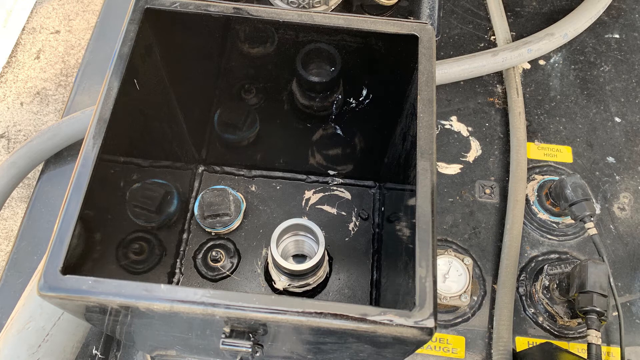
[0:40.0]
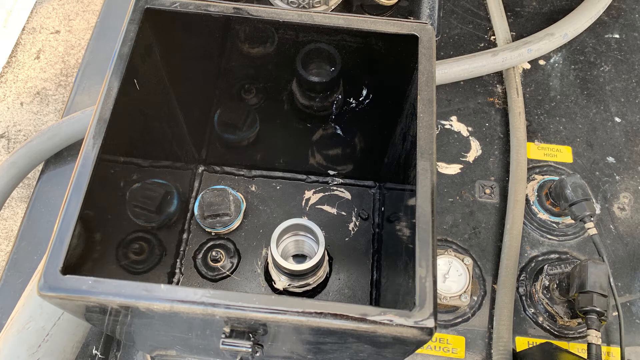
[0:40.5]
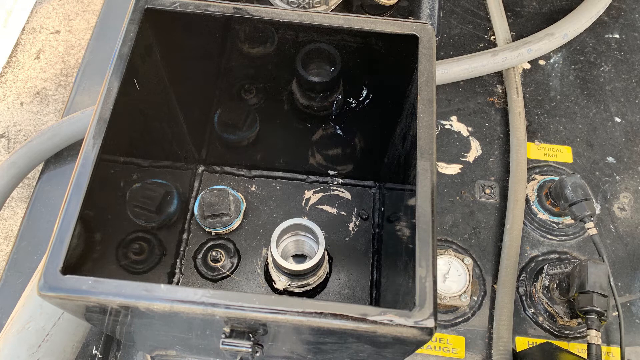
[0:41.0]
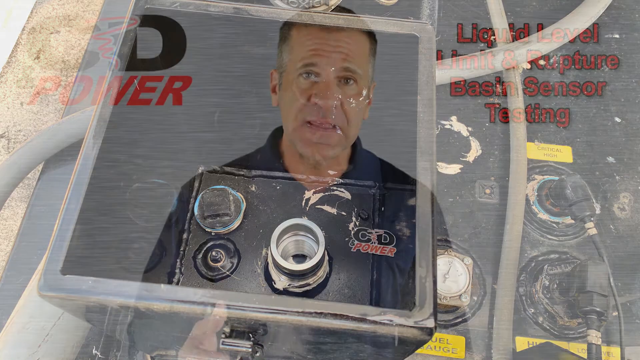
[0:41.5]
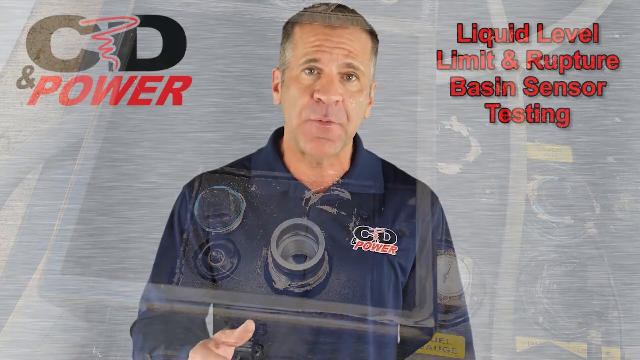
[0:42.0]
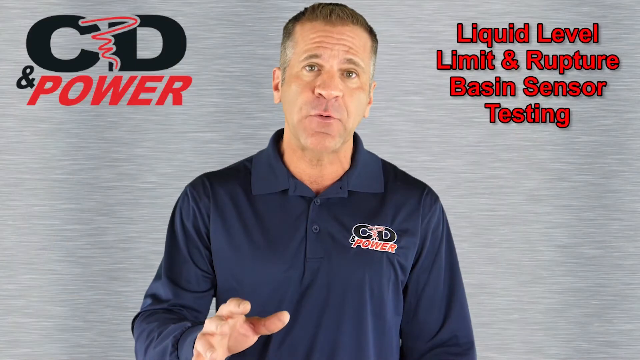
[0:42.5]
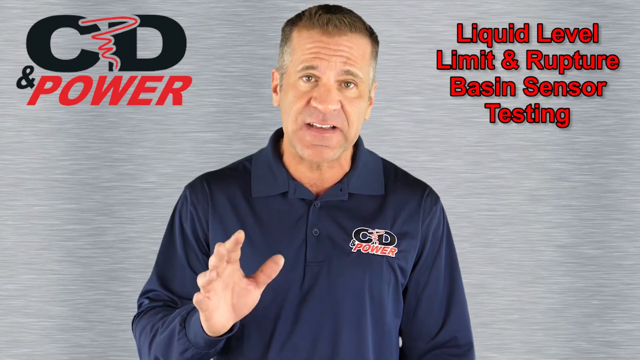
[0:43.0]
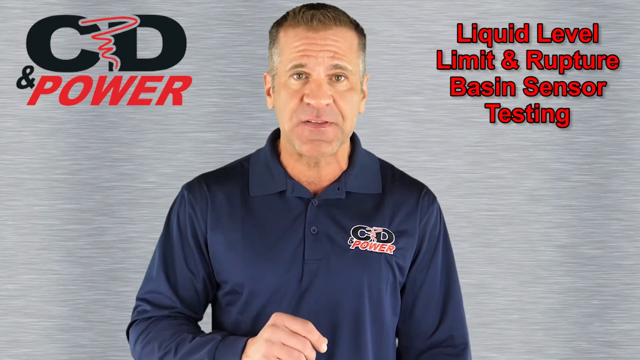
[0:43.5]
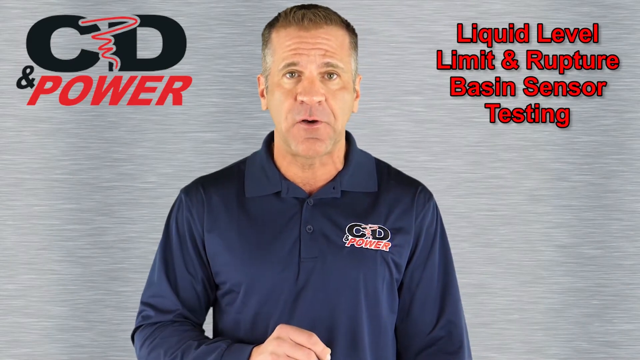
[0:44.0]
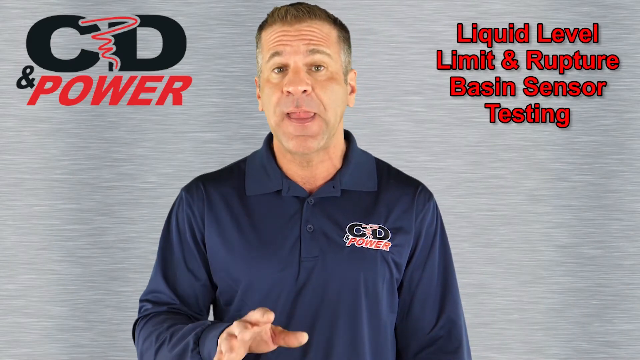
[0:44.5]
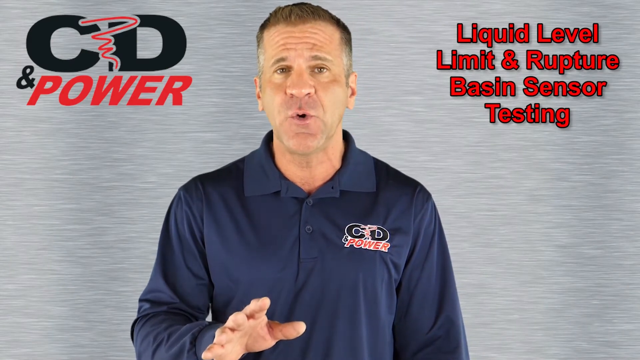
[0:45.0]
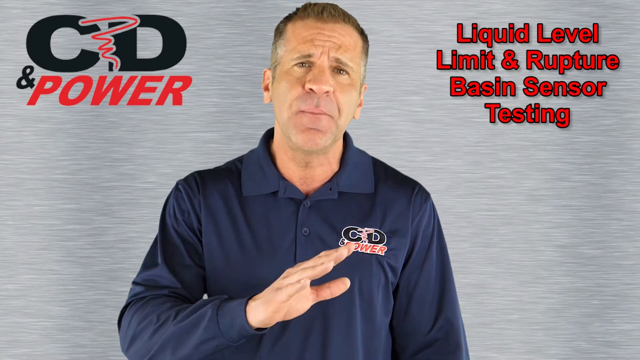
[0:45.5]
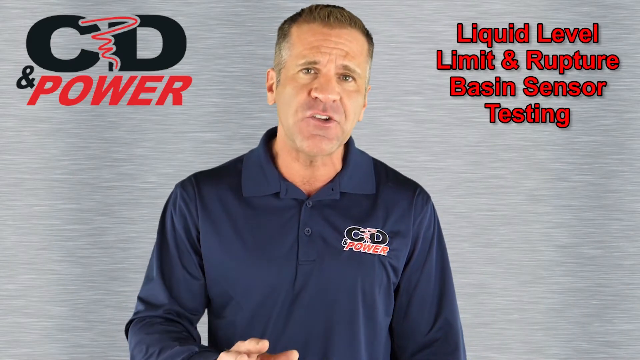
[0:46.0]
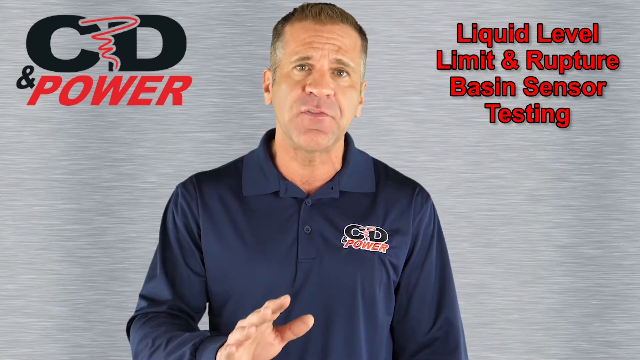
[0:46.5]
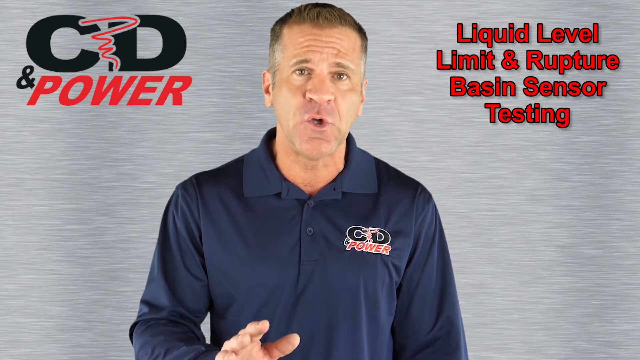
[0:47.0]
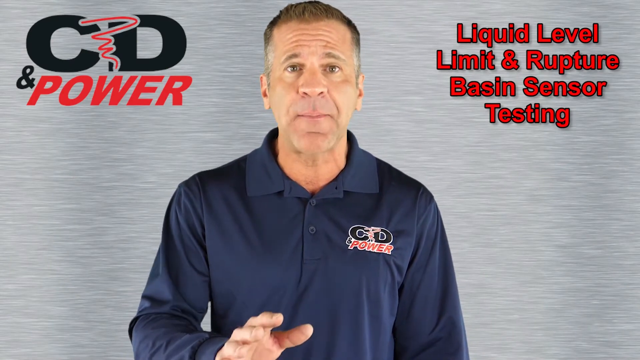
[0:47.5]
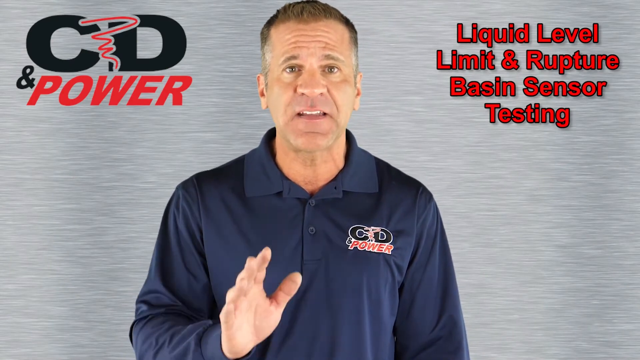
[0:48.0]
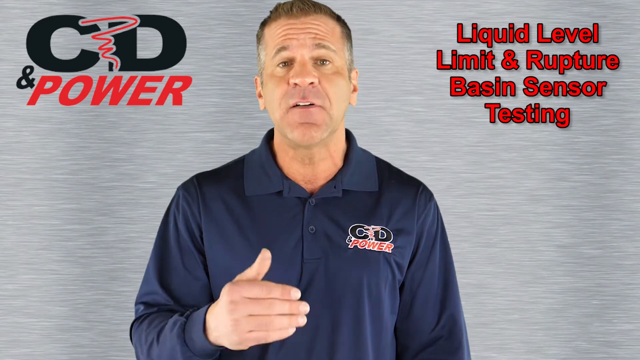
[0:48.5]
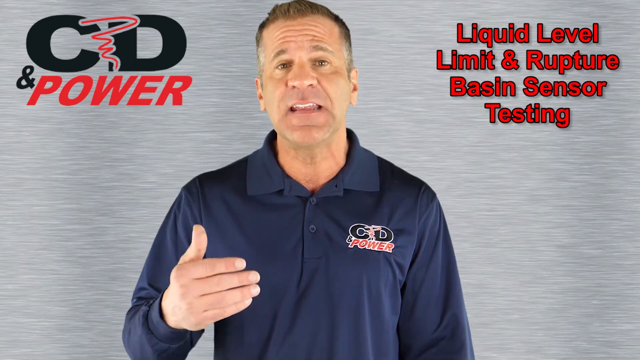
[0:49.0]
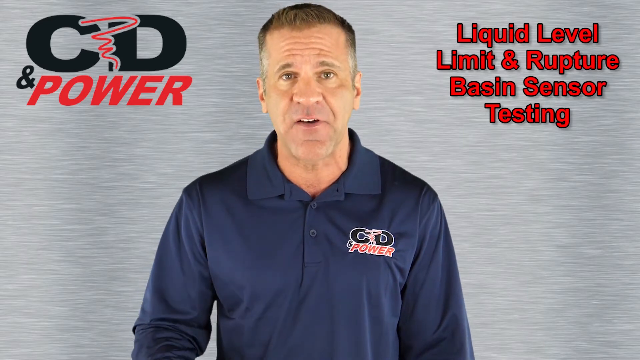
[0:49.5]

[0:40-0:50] The man talks again with a candid, focused look. He is a bit older, with very short hair, almost a military cut: not flat, but very low. His hairline goes inward, then outward a bit, then back inward from left to right. His hair is sort of dark brown, with some gray on his sideburns.